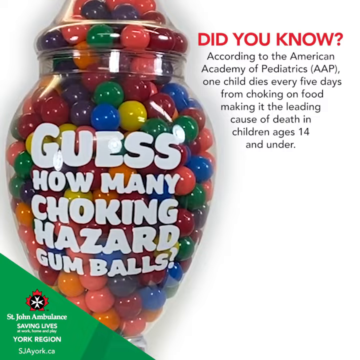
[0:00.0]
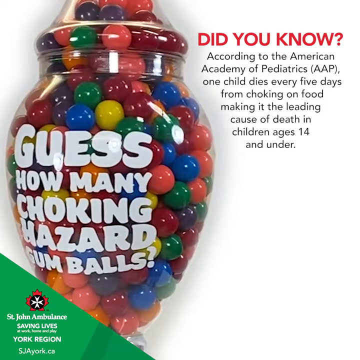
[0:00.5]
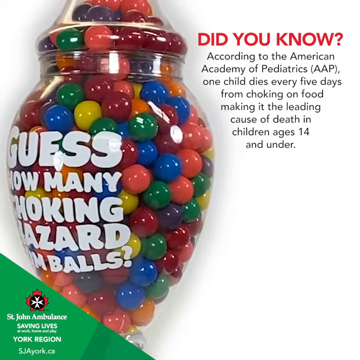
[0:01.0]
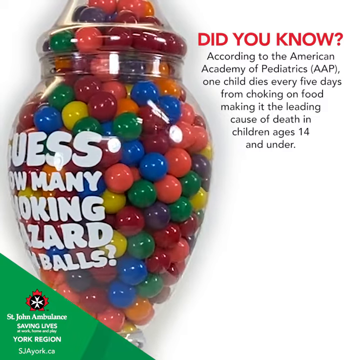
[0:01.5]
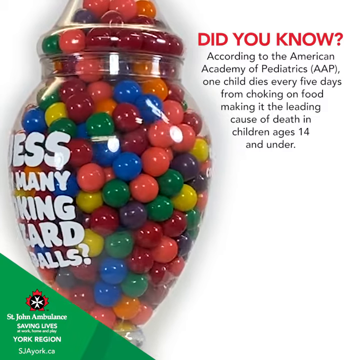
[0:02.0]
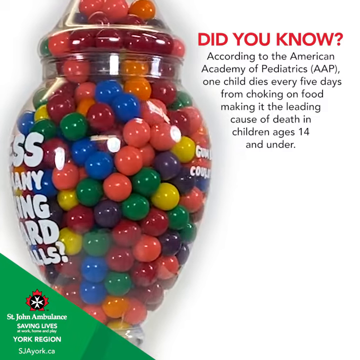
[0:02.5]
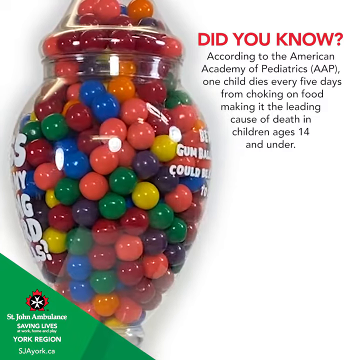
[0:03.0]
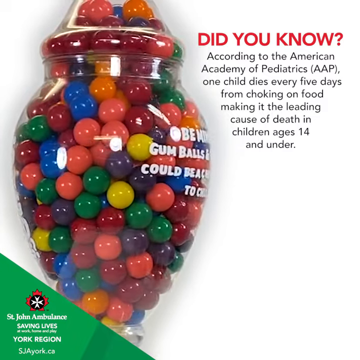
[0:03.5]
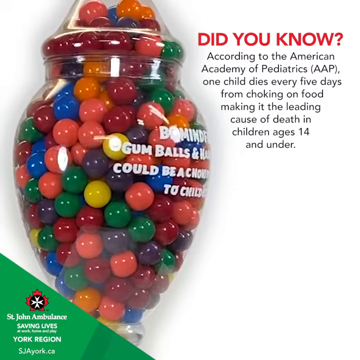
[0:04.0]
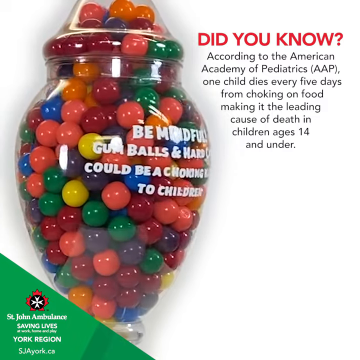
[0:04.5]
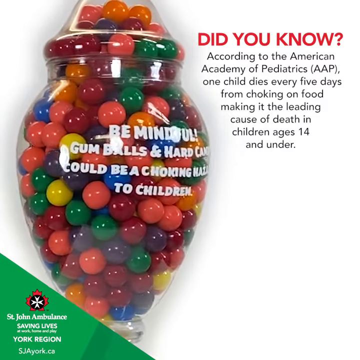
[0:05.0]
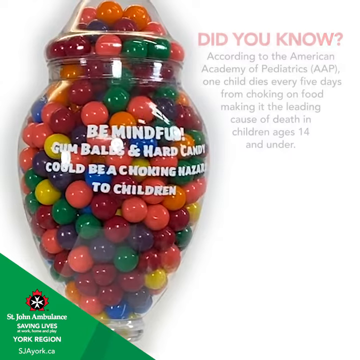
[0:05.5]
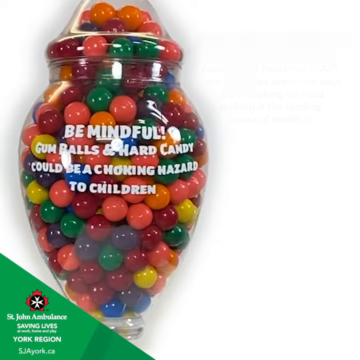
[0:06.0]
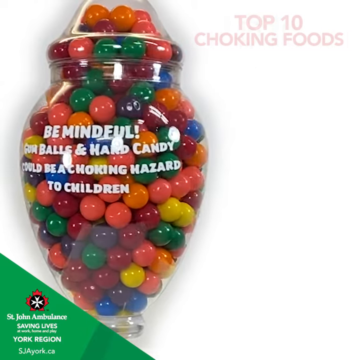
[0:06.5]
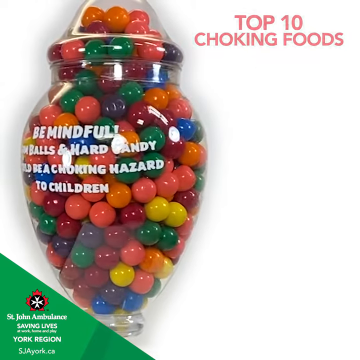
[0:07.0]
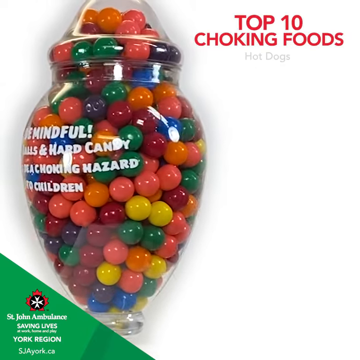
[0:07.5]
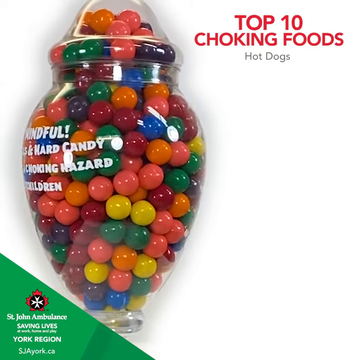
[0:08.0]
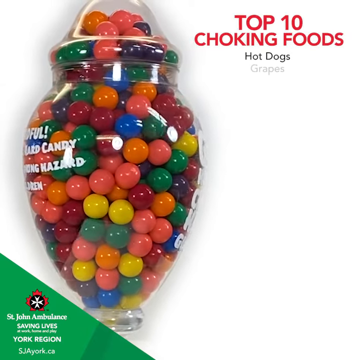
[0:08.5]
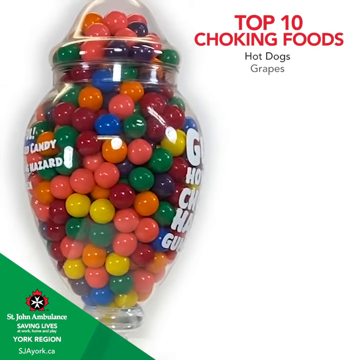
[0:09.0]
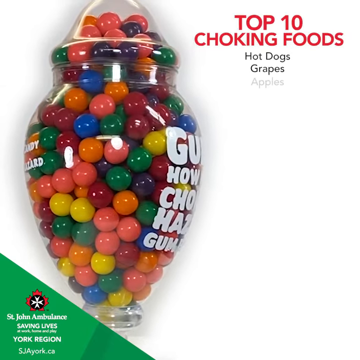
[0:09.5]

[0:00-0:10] A giant clear container holds colorful gumballs in green, pink, purple, red, yellow, blue and orange. On the container, white lettering reads "guess how many choking hazard gumballs?" Next to it, red text reads "did you know", and underneath that the text says "according to the American Academy of Pediatrics one child dies every five days from choking on food making it the leading cause of death in children ages 14 and under." A St. John Ambulance logo is in a bottom corner, with the text "saving lives at work home and play" and "York region sjayork.ca". A list of the top 10 choking foods then begins in red text, starting with hot dogs, grapes and apples.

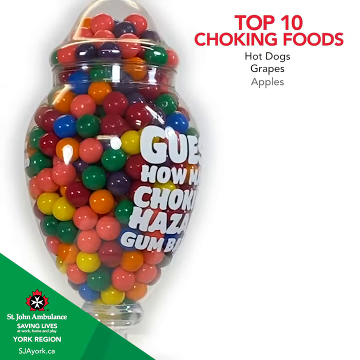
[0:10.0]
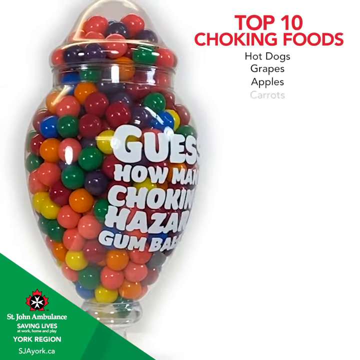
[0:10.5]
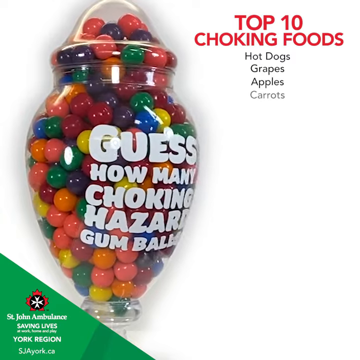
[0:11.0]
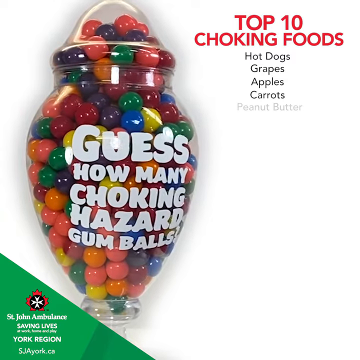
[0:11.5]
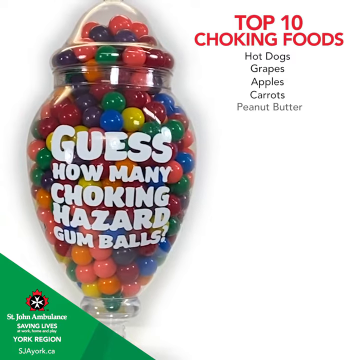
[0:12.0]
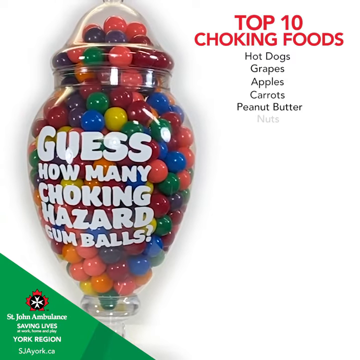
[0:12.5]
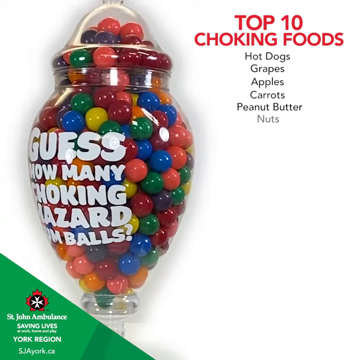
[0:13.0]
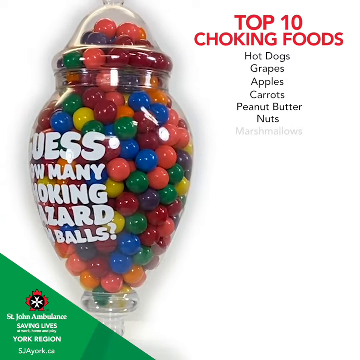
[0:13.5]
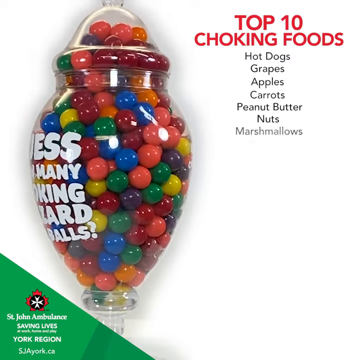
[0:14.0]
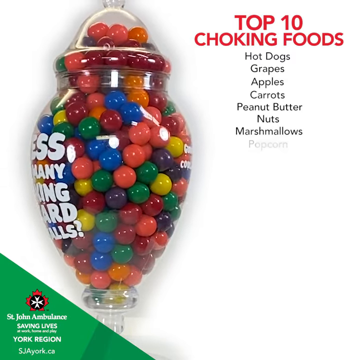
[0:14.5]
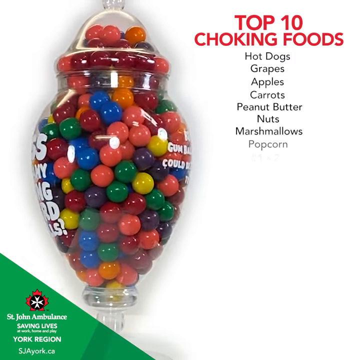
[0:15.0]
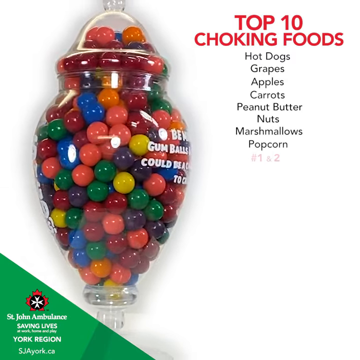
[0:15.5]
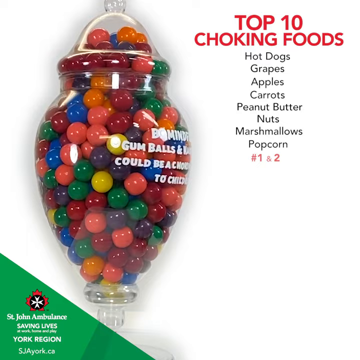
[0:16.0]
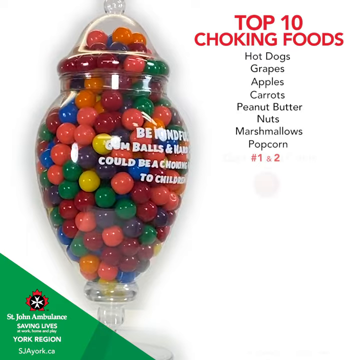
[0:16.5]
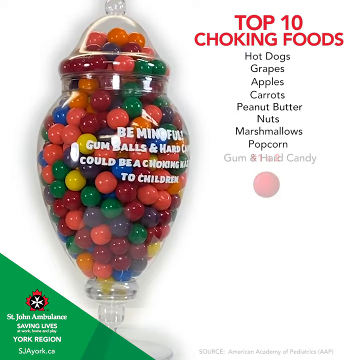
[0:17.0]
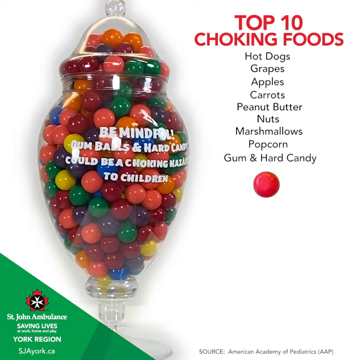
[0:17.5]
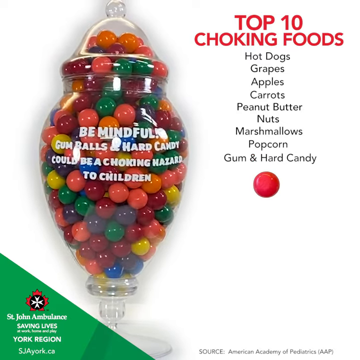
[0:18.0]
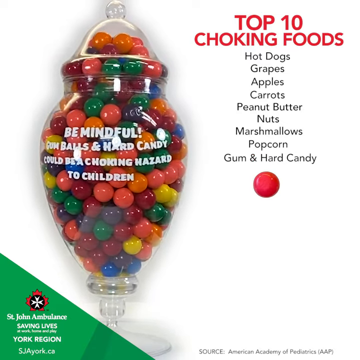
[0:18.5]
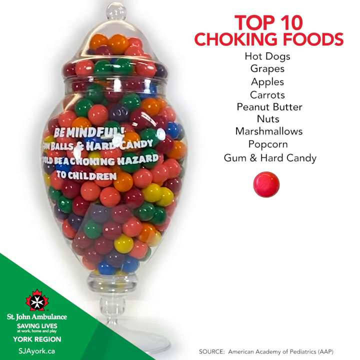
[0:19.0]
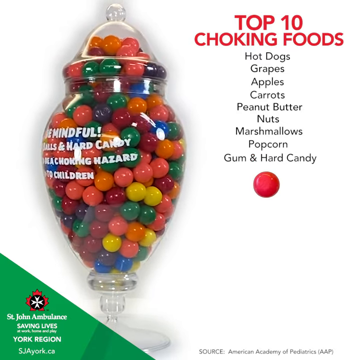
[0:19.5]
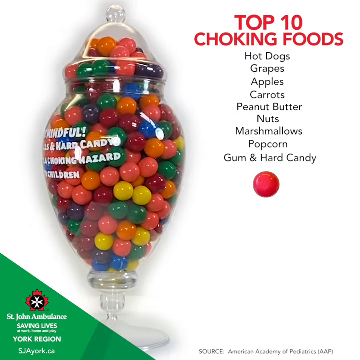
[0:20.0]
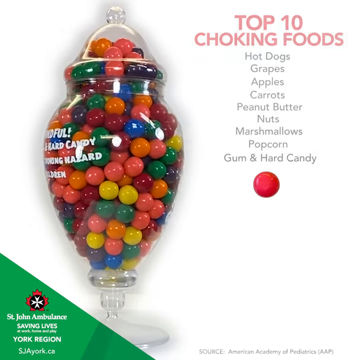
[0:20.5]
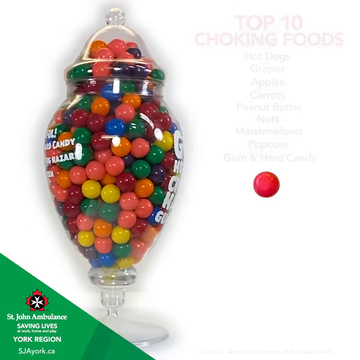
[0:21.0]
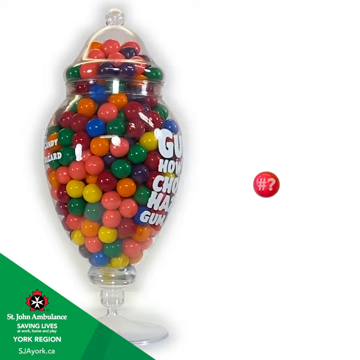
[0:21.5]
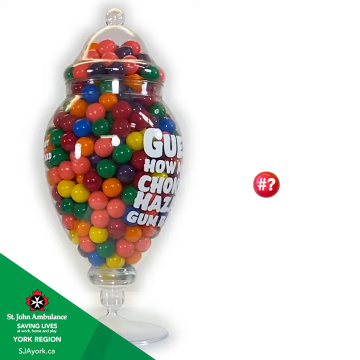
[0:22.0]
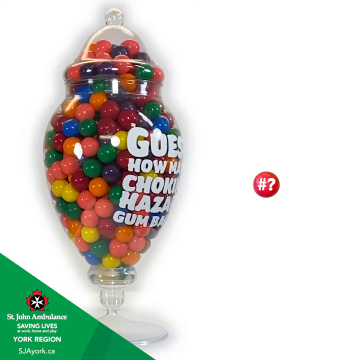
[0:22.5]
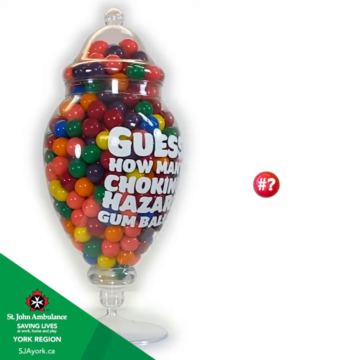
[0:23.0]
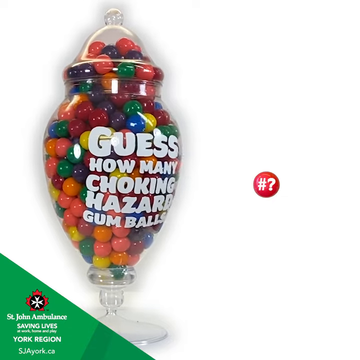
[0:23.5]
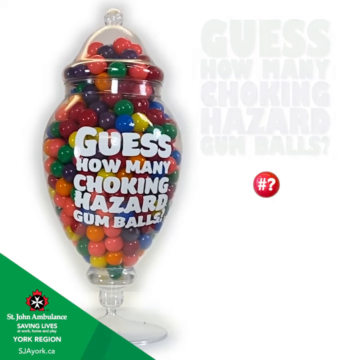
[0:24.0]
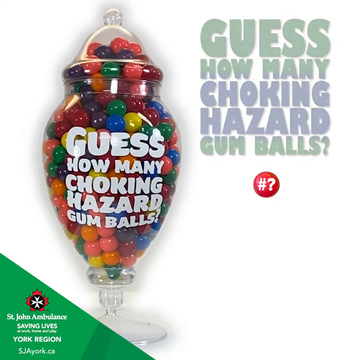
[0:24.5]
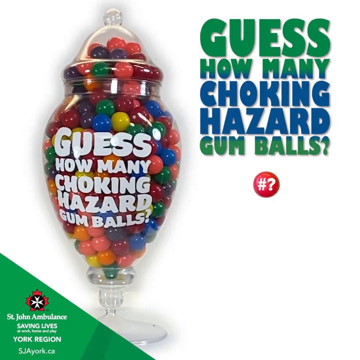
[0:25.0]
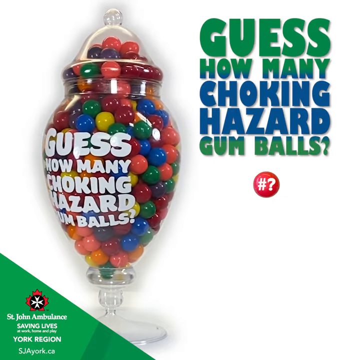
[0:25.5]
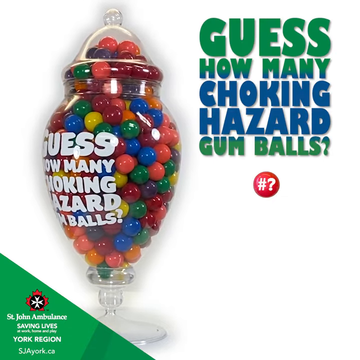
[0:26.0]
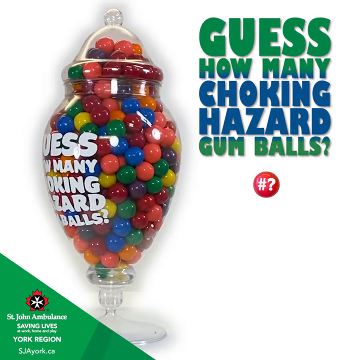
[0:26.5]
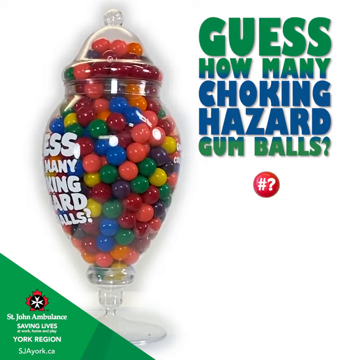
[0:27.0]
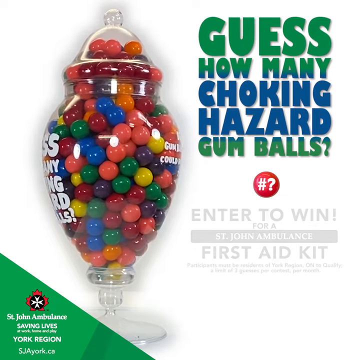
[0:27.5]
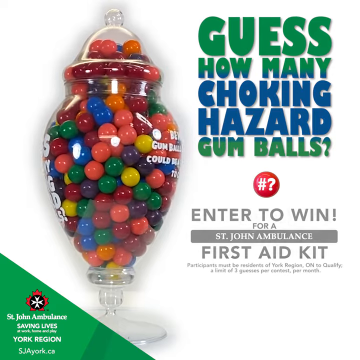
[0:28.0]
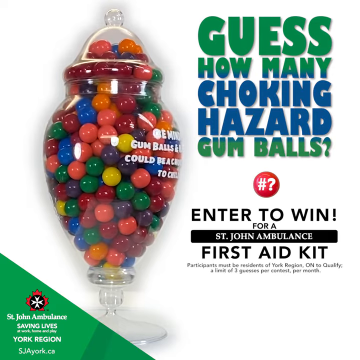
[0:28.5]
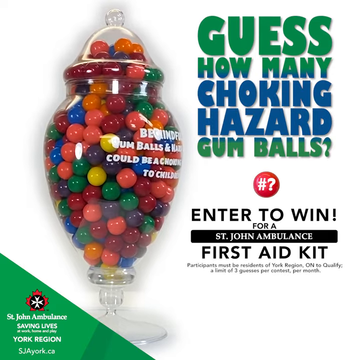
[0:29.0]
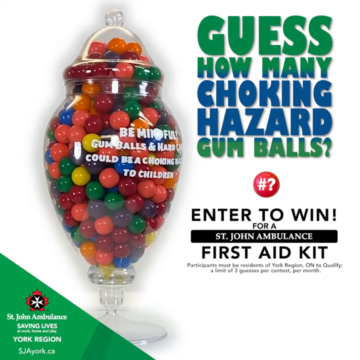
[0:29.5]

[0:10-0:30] The list of 10 choking foods continues after apples with carrots, peanut butter, nuts, marshmallows and popcorn, and then the top two, gum and hard candy. Underneath that text, a red gumball appears on the white screen, and the food items disappear. On the red gumball is the text "#?". Blue and green text then appears reading "guess how many choking hazard gumballs?", followed by text reading "enter to win for a St. John Ambulance First Aid Kit". In smaller fine print it says "participants must be residents of York Region, Ontario to qualify. A limit of three guesses per contest per month." On the left side, the container of gumdrops continues to spin around in a circle as the text appears.